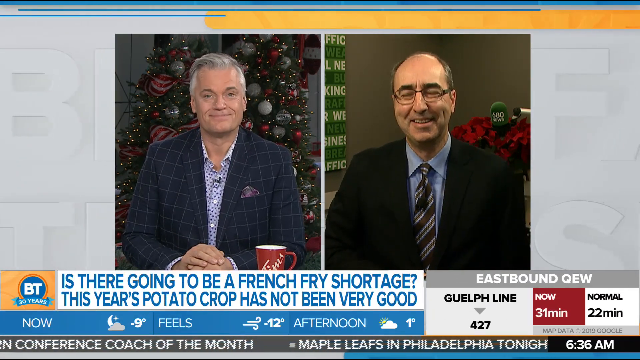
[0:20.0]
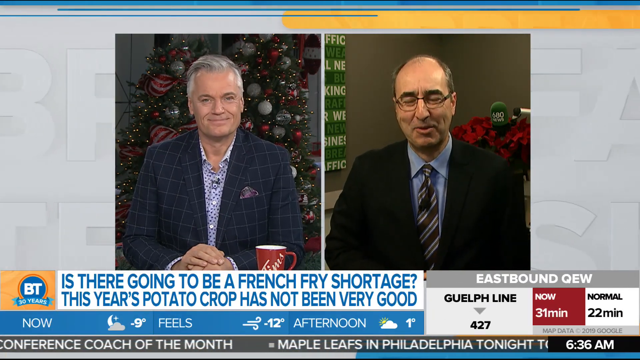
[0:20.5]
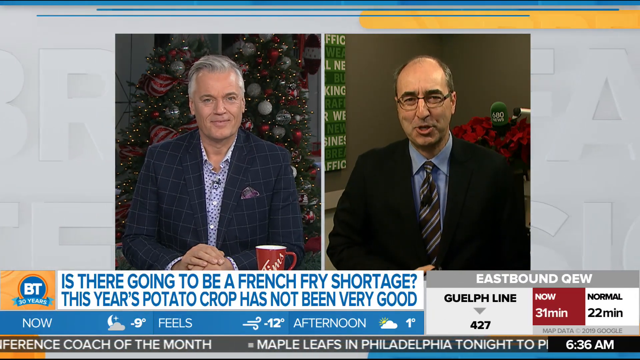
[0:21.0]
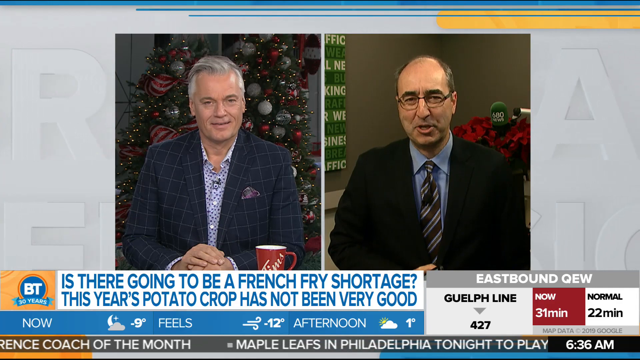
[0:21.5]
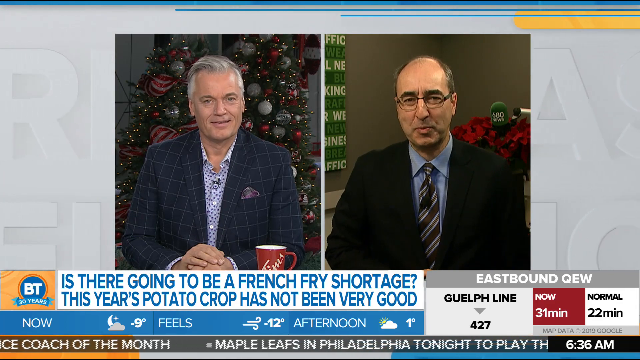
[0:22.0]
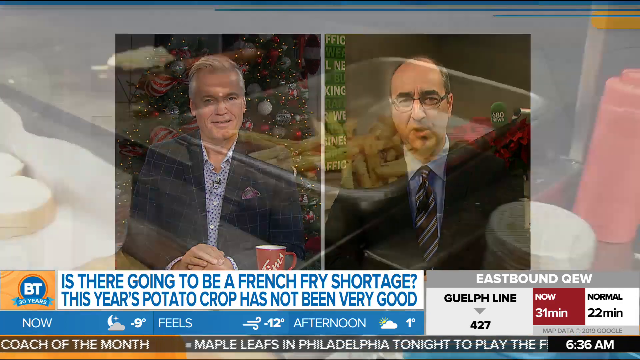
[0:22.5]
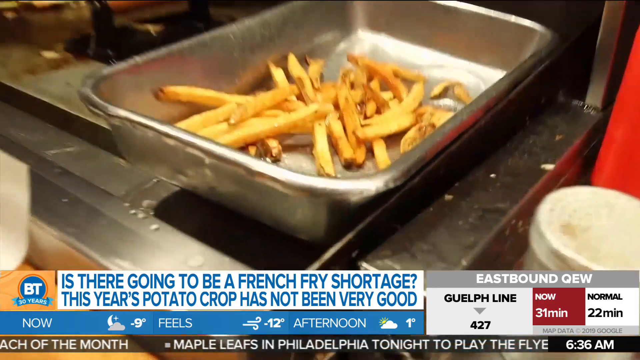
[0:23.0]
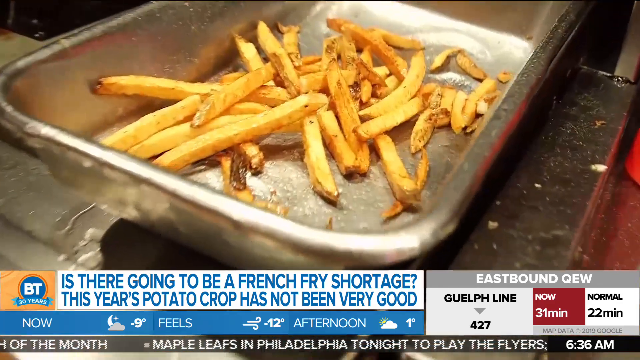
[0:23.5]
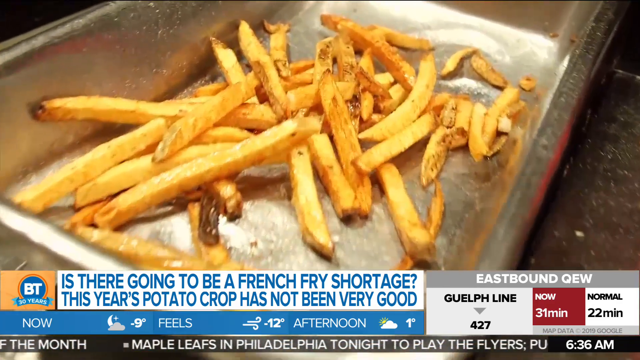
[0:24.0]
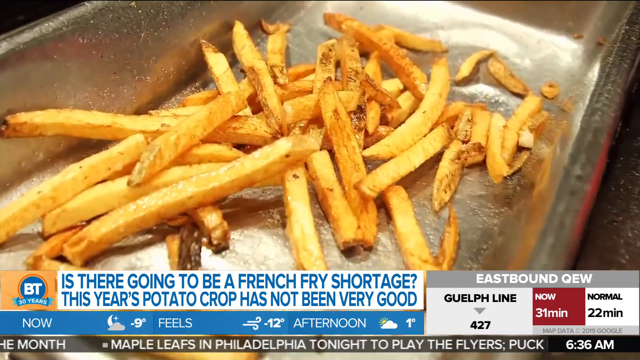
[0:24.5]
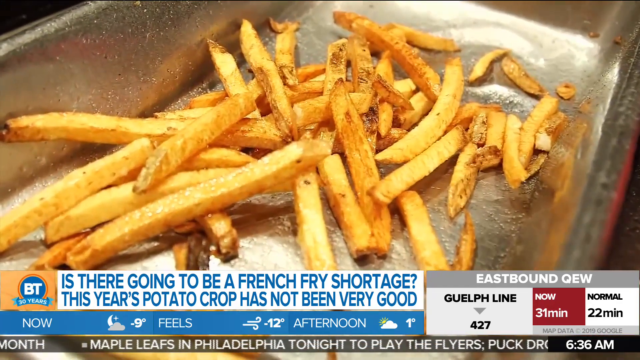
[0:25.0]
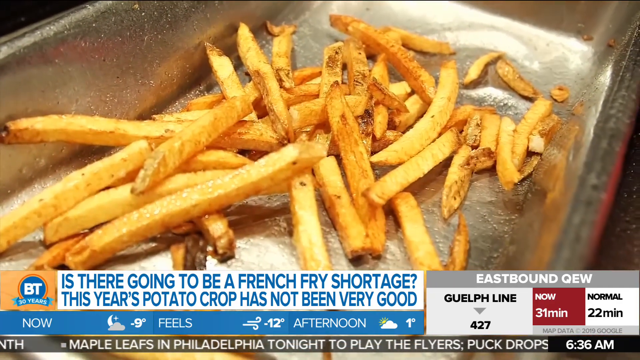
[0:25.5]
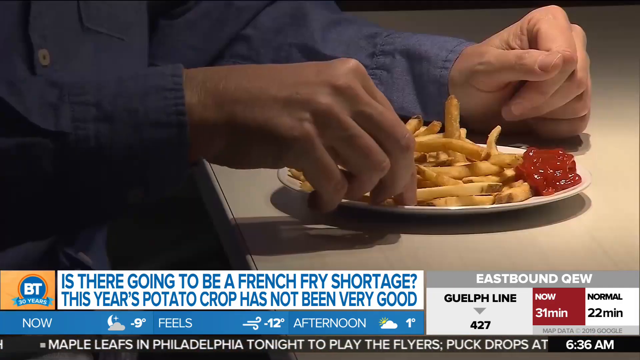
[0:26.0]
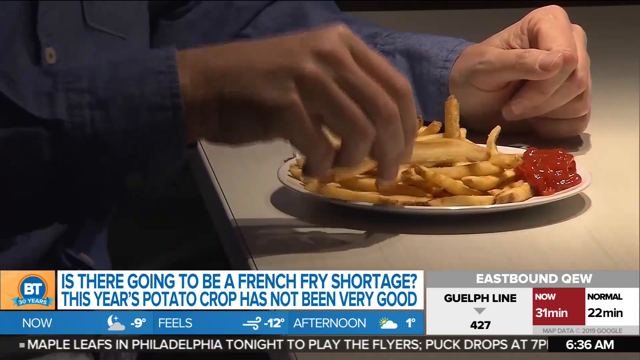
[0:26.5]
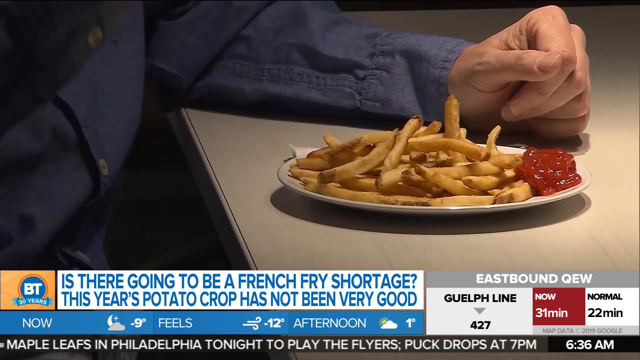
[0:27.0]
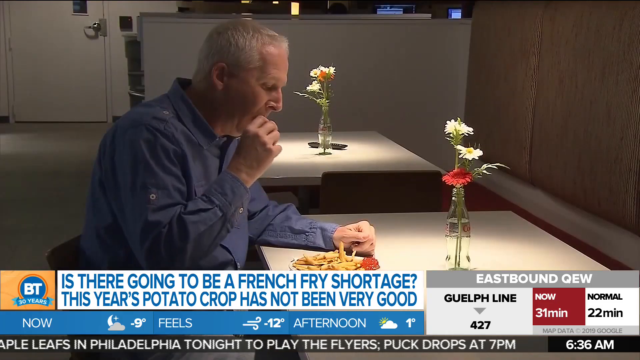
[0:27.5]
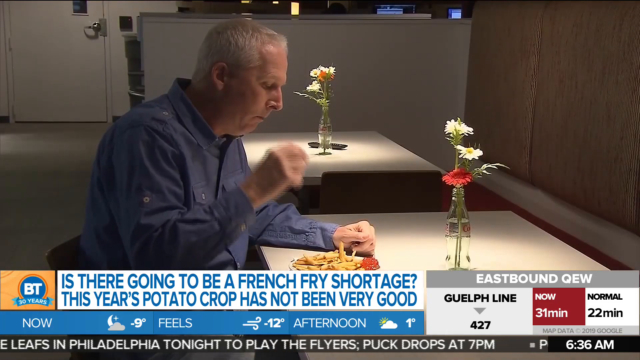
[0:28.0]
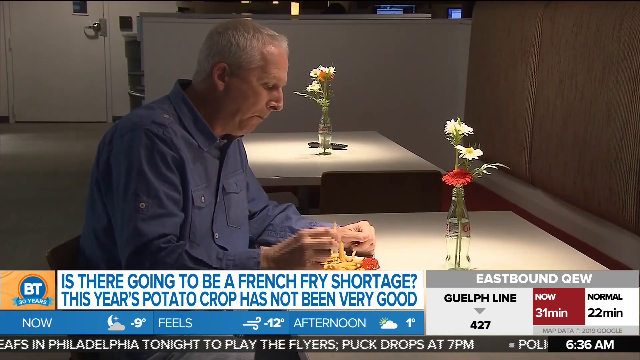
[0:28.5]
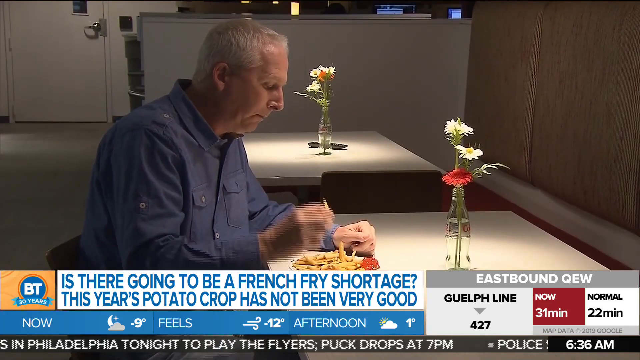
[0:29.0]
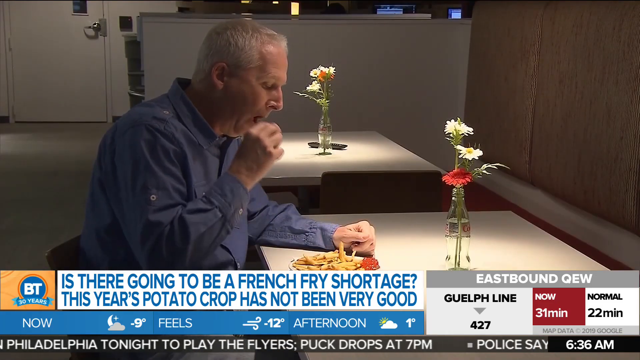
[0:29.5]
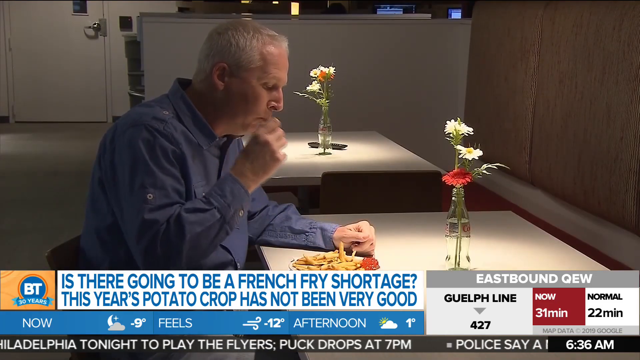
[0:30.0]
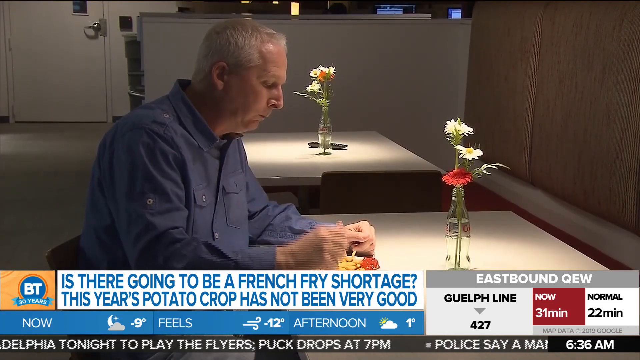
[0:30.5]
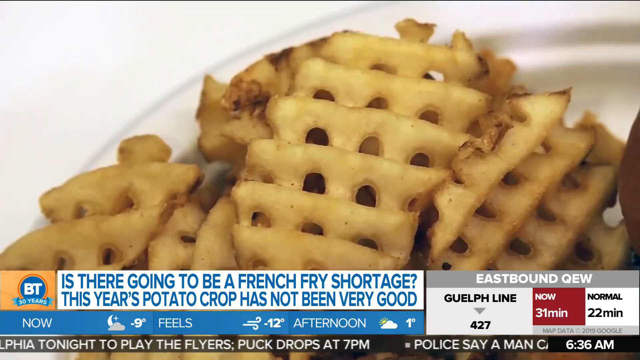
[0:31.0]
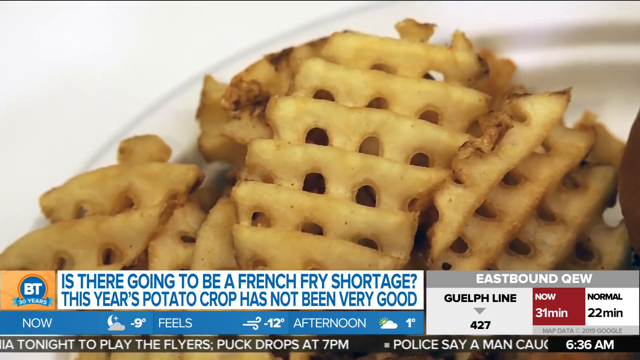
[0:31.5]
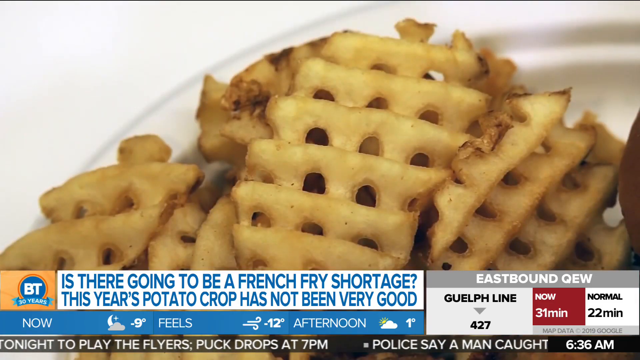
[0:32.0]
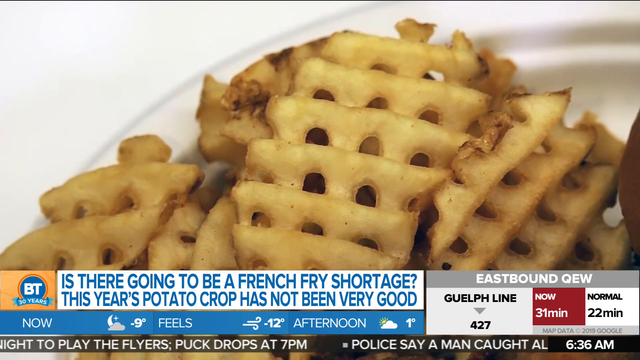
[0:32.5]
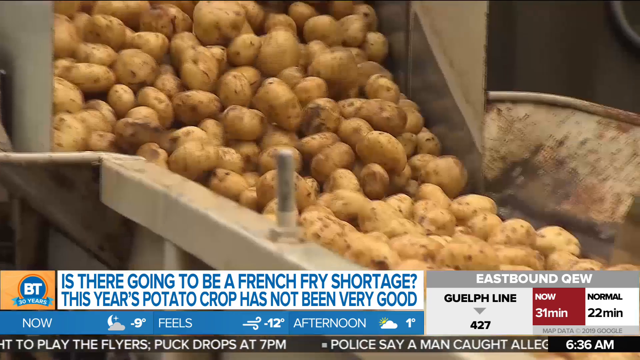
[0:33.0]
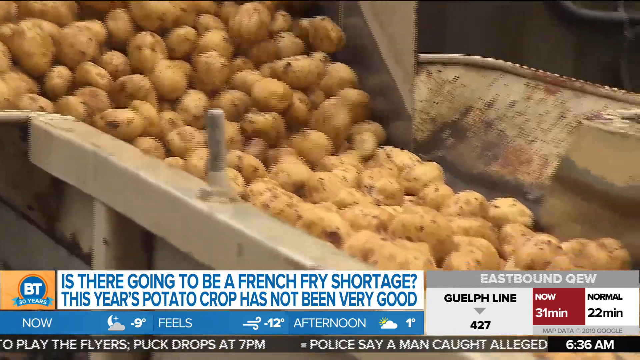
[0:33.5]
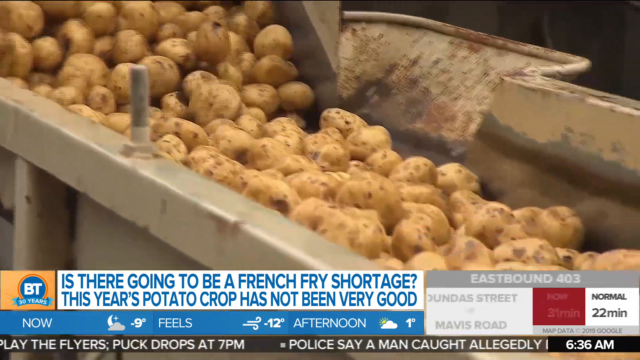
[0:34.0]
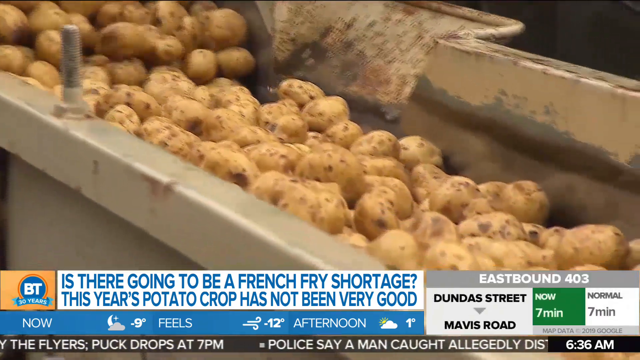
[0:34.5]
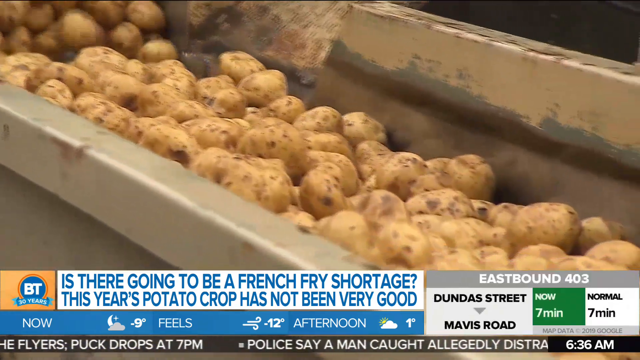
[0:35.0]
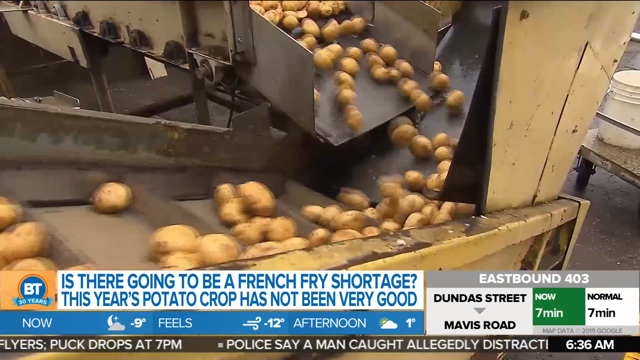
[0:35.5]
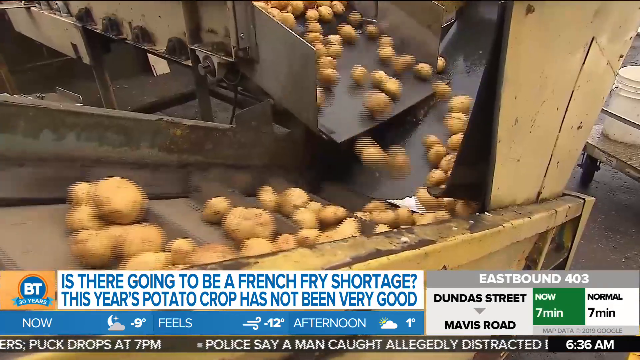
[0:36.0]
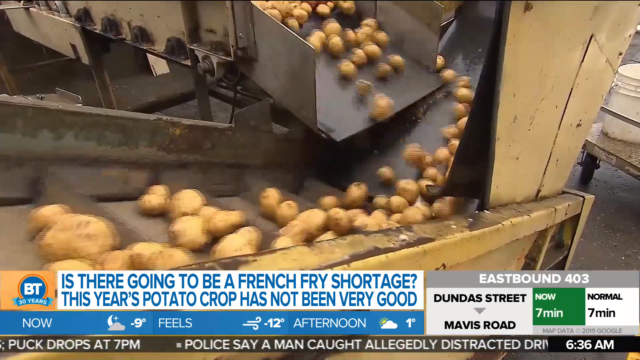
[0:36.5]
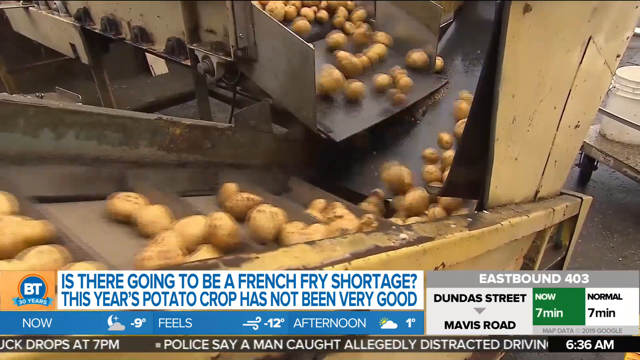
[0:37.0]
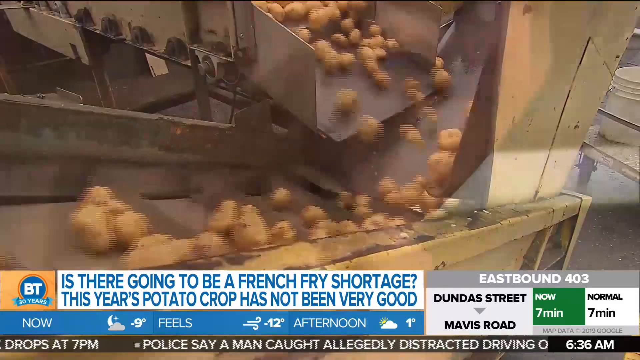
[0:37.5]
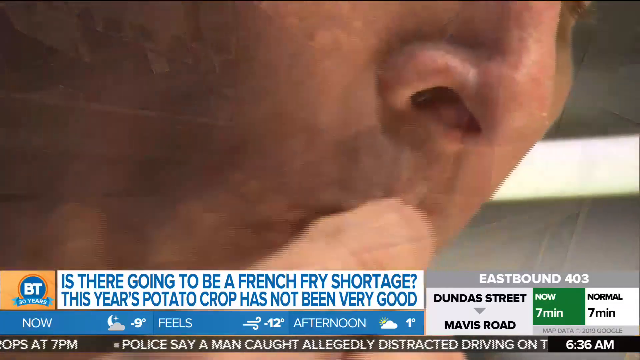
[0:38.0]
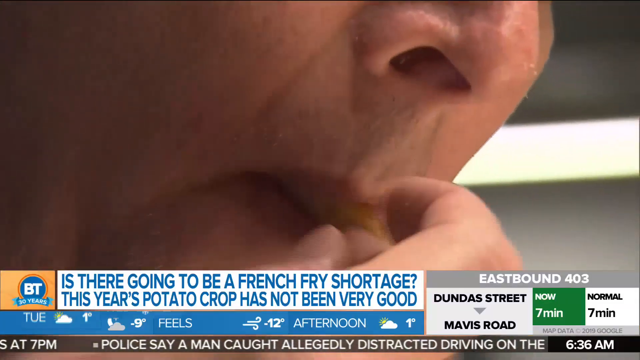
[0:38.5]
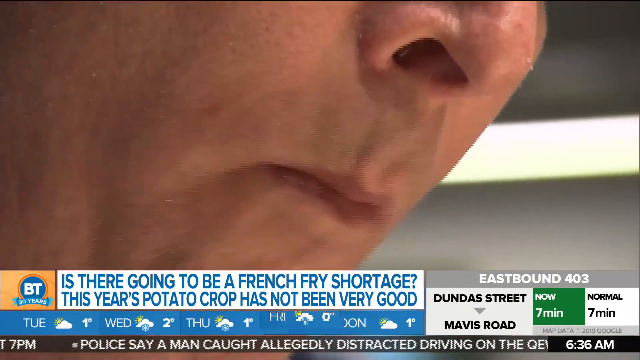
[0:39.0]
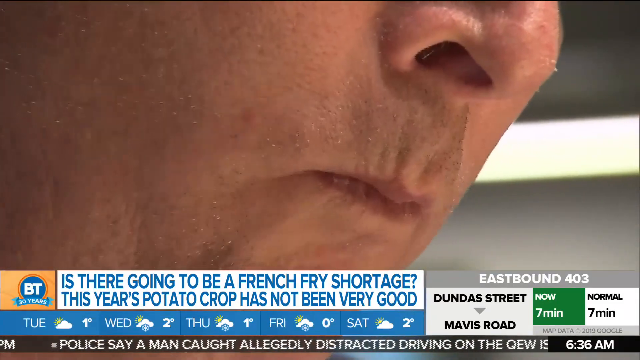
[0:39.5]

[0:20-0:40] Two newscasters talk to each other on a split screen. The man on the right appears to be in his 50s; he is balding and wears black glasses, a black suit, a blue shirt, and a striped blue and gray tie. The man on the left appears to be in his 50s, with gray hair, a black suit with white stripes, and a white polka dot shirt underneath. He rests his right hand on top of his left hand on a table and is sitting in front of a Christmas tree. At the bottom of the screen, a white rectangle reads "Is there going to be a French fry shortage? This year's potato crop has not been very good." To the left of this box, the letters "BT" in white are in a blue circle with a red circle around it, with a banner reading "30 years" underneath and weather information below. Traffic information is on the right side of the screen. At the top, a yellow bar and a thin blue line move to the right. The video cuts to a kitchen, where a pan holds a bunch of French fries in its center, and the camera zooms in on them. Another shot shows a man eating French fries from a white plate with ketchup on it. His forearms are visible in a long-sleeved blue shirt; his left hand rests to the left of the plate while he eats a fry with his right hand. The camera zooms out to show his face and upper body as he sits at a white table with a vase that looks like it is made from a Coke bottle, holding a red flower and two white flowers. He eats a fry with his right hand. A close-up shows waffle fries in a white bowl. Next, a large amount of potatoes on a conveyor belt in a factory come down an incline and are funneled into a flat, thinner area. Another shot shows a bunch of potatoes falling down a ramp and going up a conveyor belt; each conveyor belt has multiple metal partitions. Finally, a close-up shows a man from his nose down to his chin eating a French fry.